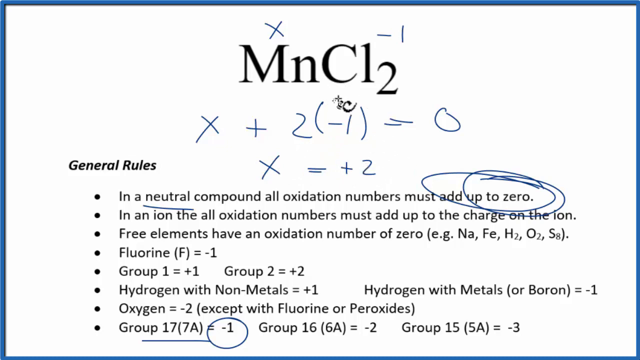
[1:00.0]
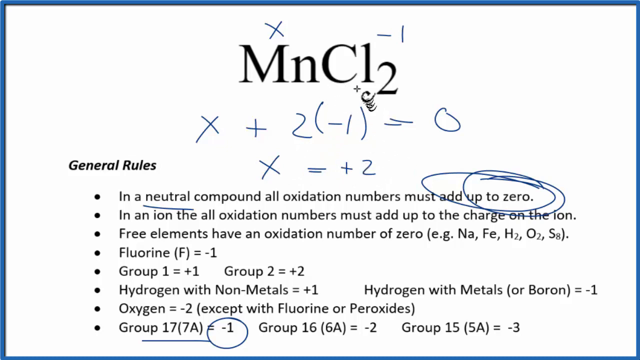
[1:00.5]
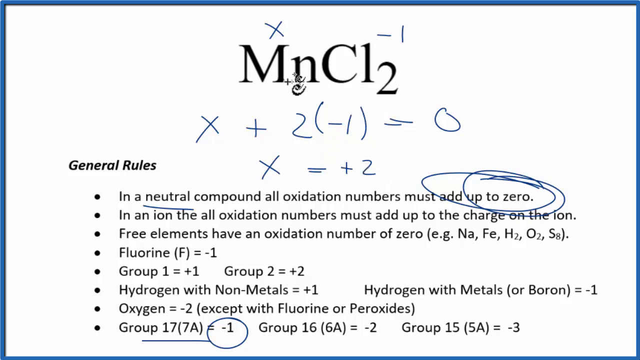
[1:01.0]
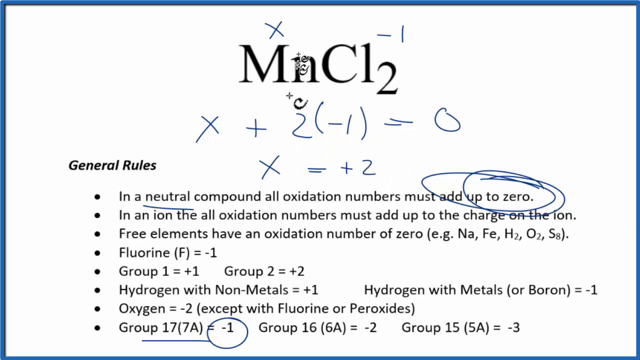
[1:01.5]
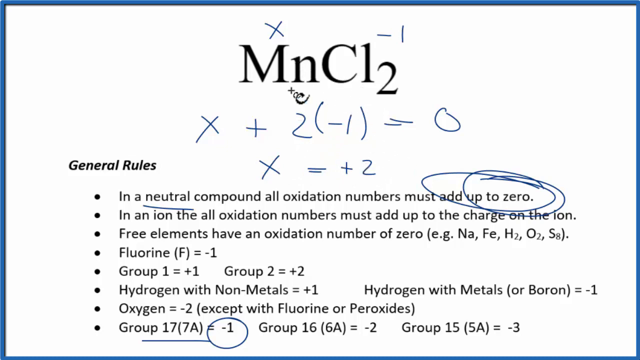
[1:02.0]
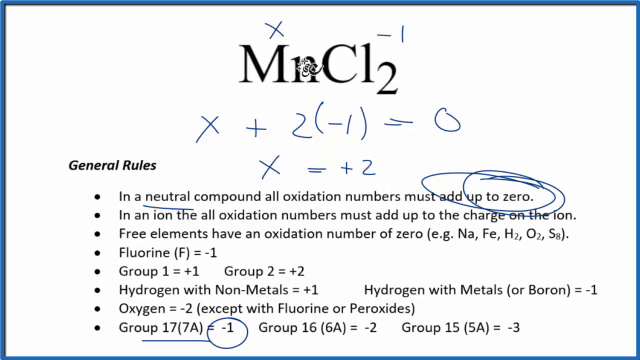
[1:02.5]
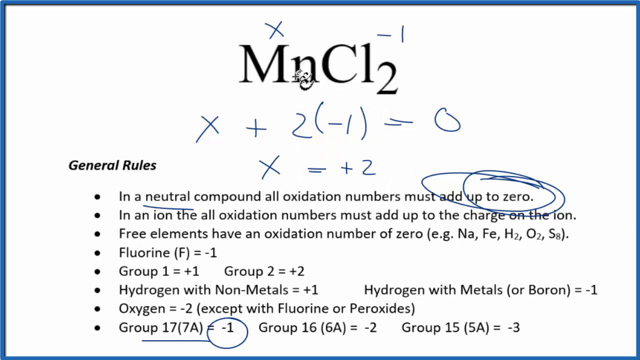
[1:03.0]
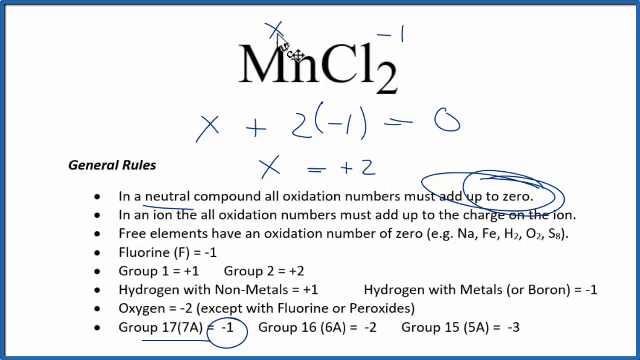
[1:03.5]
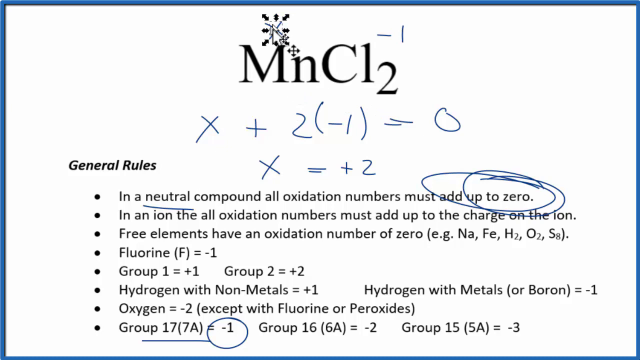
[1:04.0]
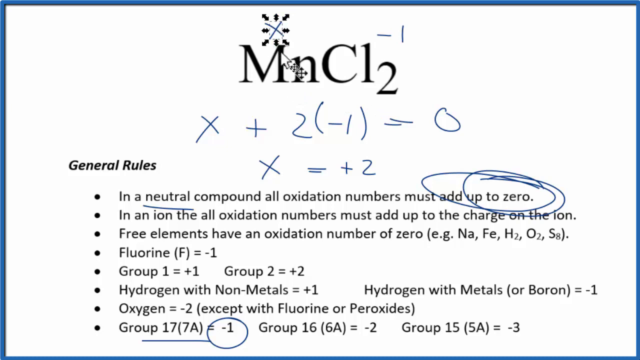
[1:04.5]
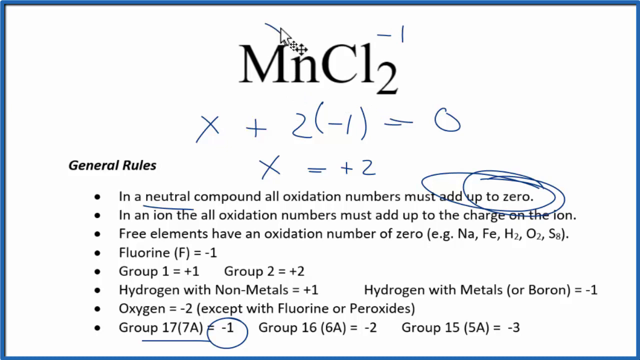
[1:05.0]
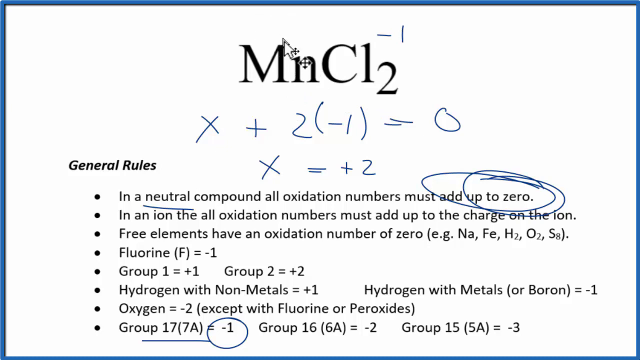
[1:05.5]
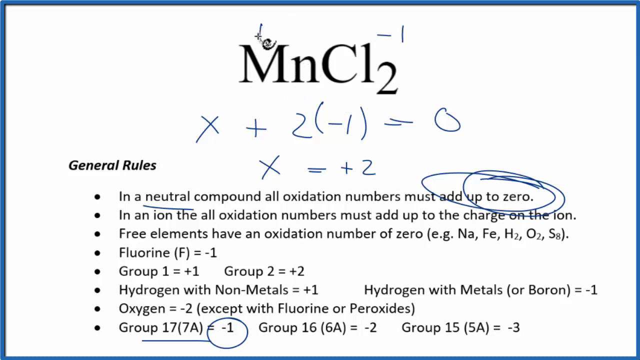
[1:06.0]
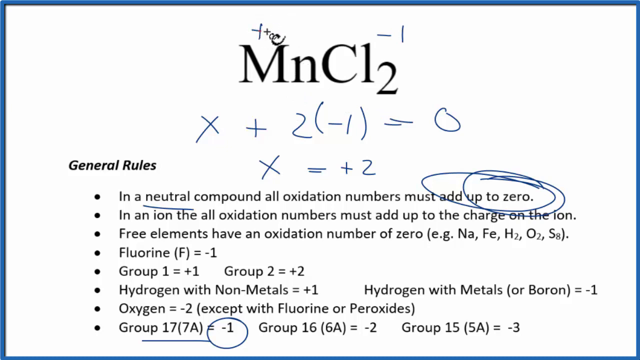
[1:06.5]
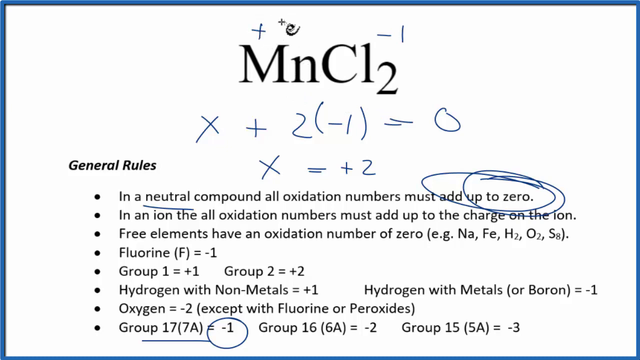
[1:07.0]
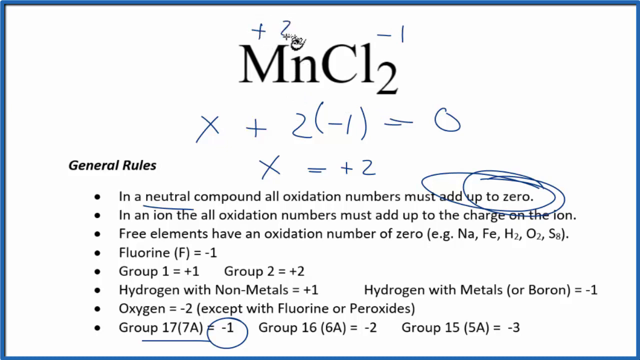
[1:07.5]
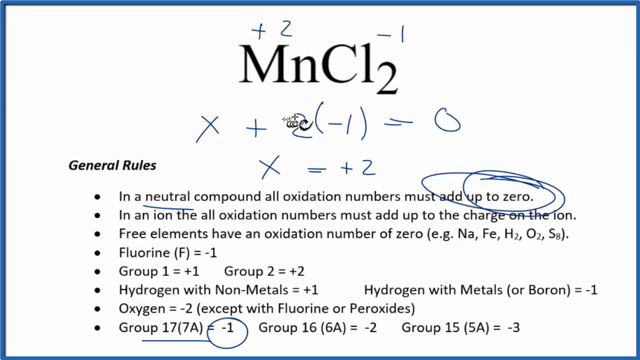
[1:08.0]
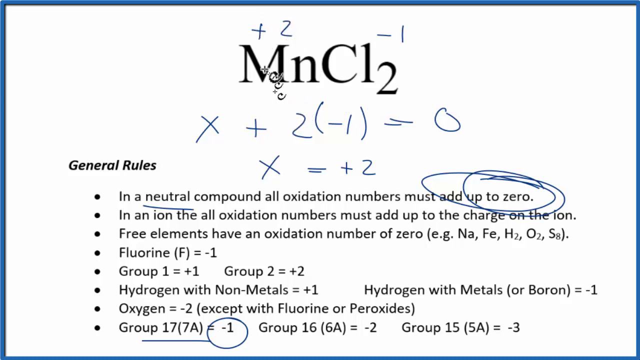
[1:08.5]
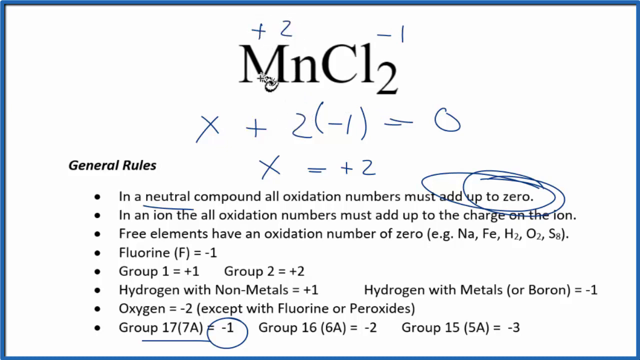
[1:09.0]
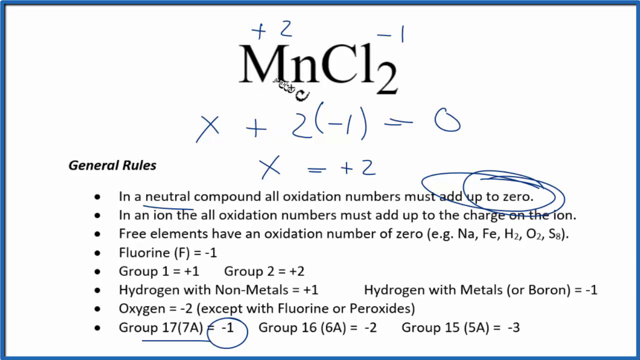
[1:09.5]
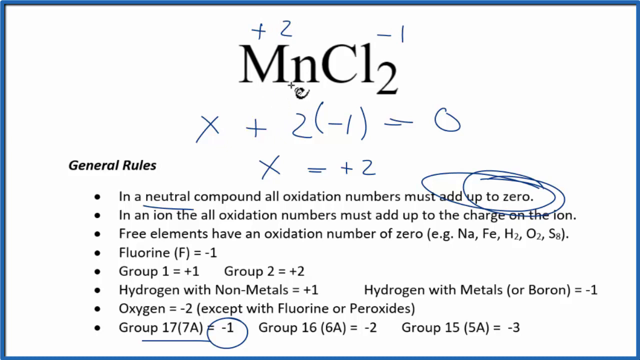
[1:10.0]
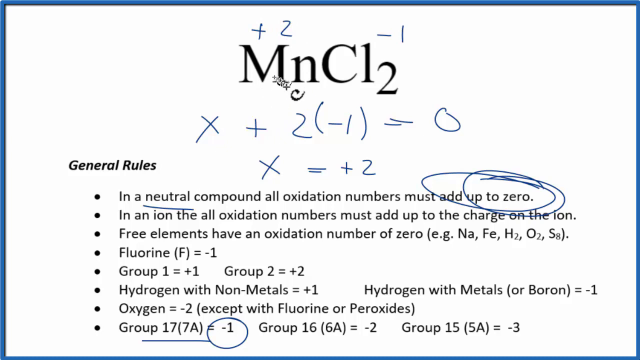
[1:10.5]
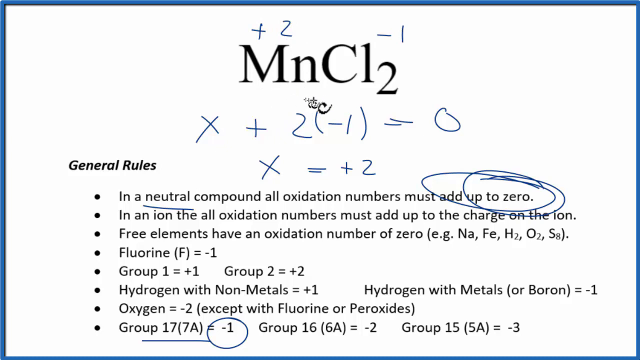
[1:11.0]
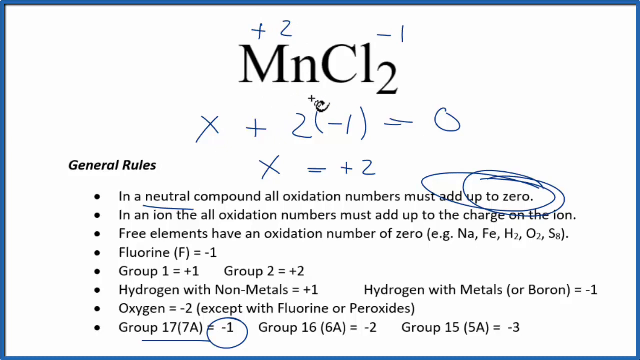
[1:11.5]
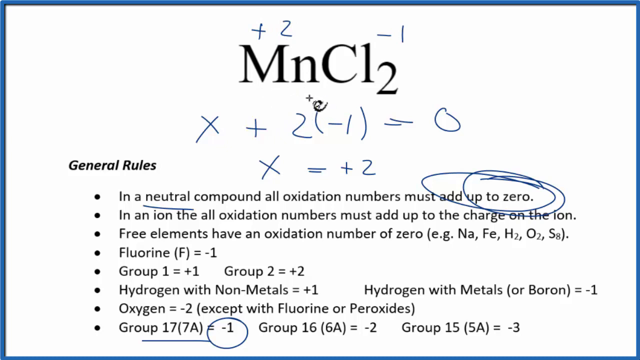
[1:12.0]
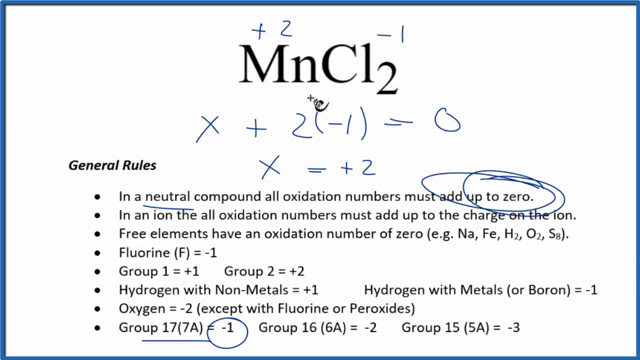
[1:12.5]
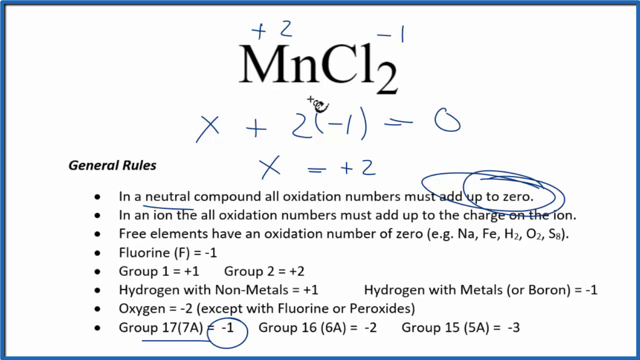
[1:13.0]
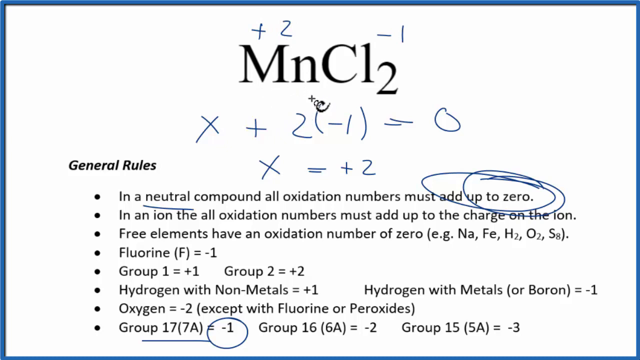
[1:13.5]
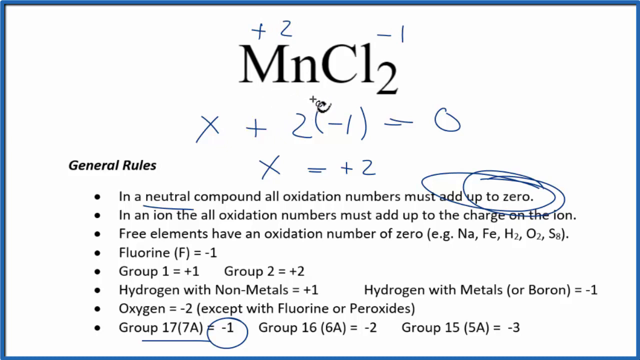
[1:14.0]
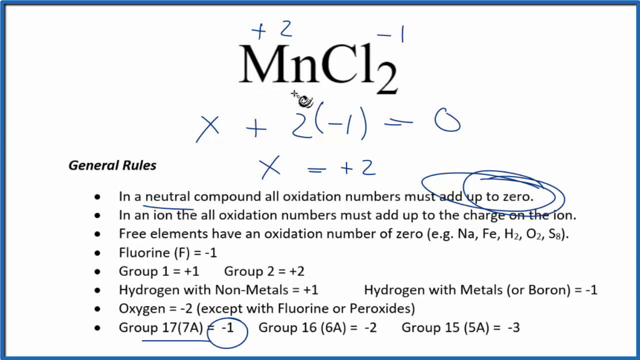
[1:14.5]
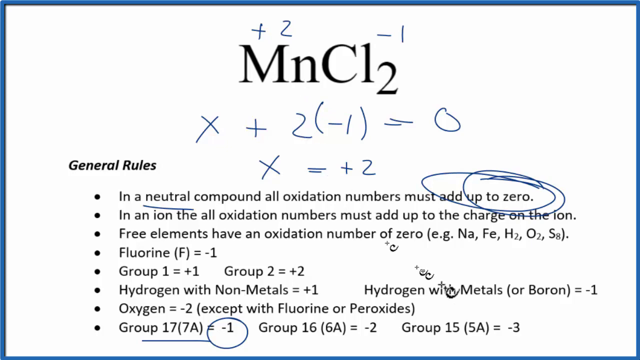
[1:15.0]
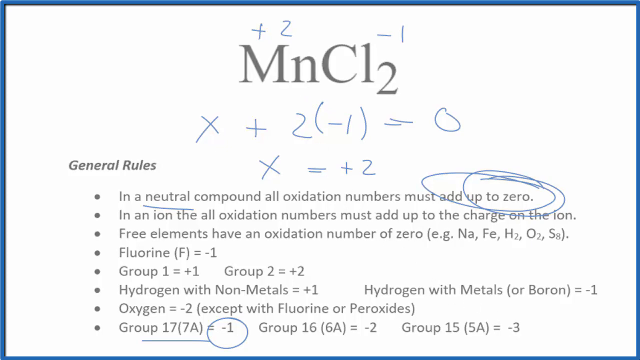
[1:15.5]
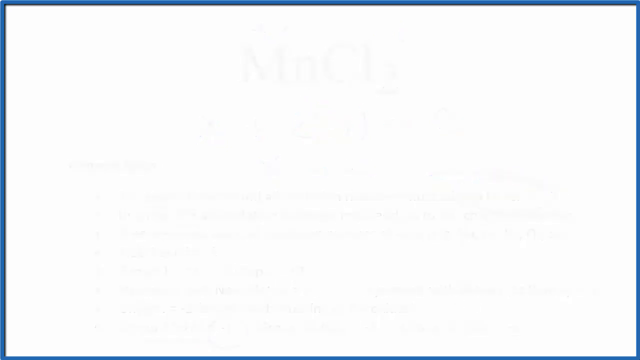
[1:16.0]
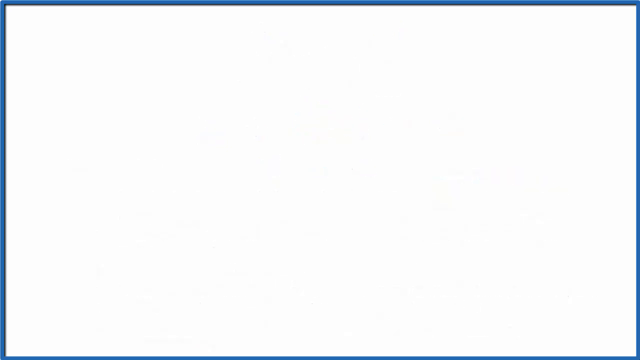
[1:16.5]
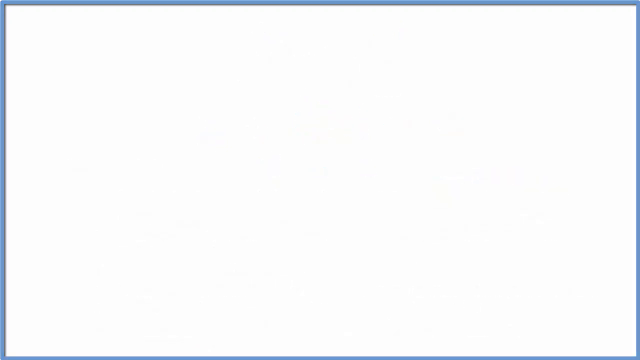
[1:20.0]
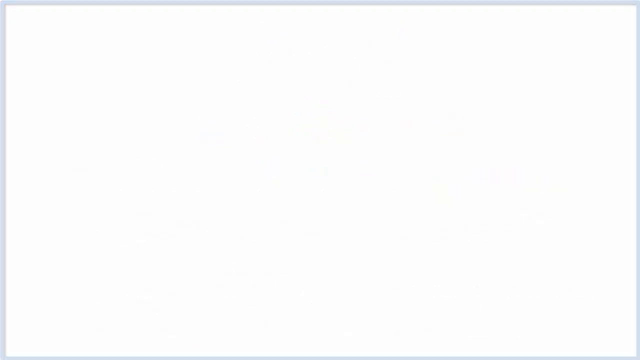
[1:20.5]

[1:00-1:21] A slideshow slide has a white background and dark blue outlines. The title is "MNCL2". A blue X is drawn above the right post of the M, and a negative one is drawn above and to the right of the L in "CL2". Beneath the title, "X + 2(-1) = 0" is written in blue, and under it the equation is reduced to "X = +2". A subtitle reads "general rules", followed by bullet points. The first reads "in a neutral compound, all oxidation numbers must add up to zero," with a line under "neutral", a circle around "add up to zero", and an additional circle around "up to zero". Toward the bottom of the list, the number negative one in "group 17 (7A) equals negative one" is circled. The mouse cursor, a plus sign with a small squiggle attached to its bottom right, is the only thing moving on screen. It draws an imaginary line between the M and the N in "MNCL2", then selects and deletes one bar of the X above the M, and then the other bar. It draws a plus above the center of the M and writes the number two to the right of it. The cursor hovers slightly over the M, lingers under the N in the title, then slides down and off screen toward the bottom right. The text on the screen fades away, leaving only a white screen.